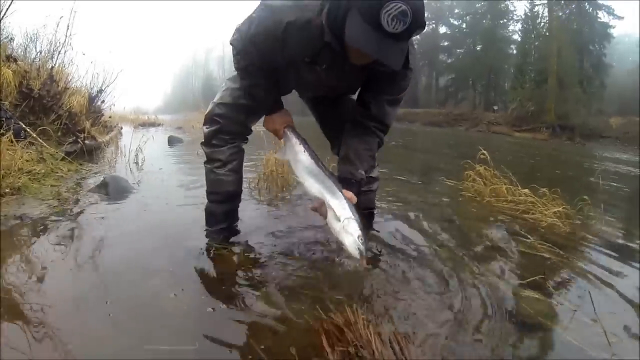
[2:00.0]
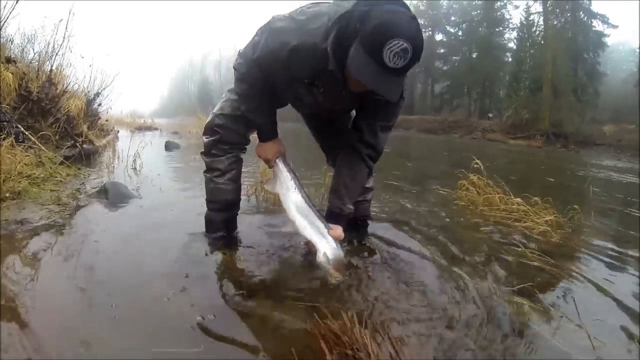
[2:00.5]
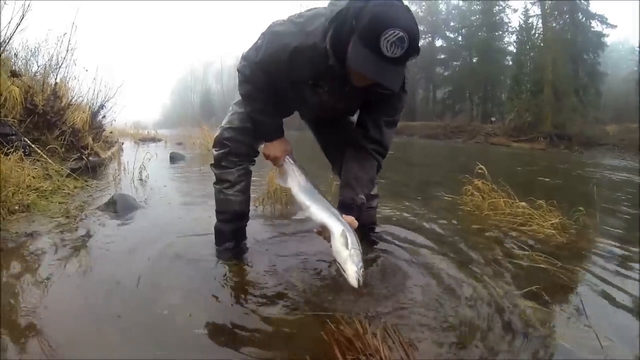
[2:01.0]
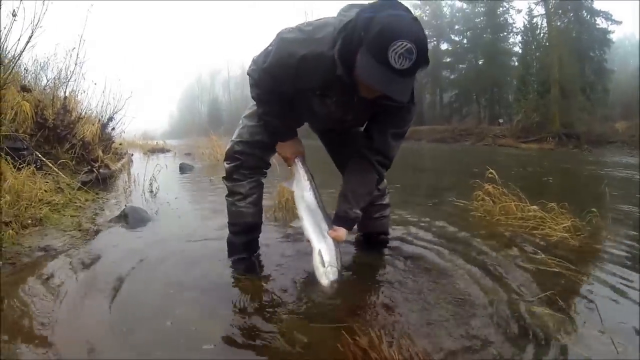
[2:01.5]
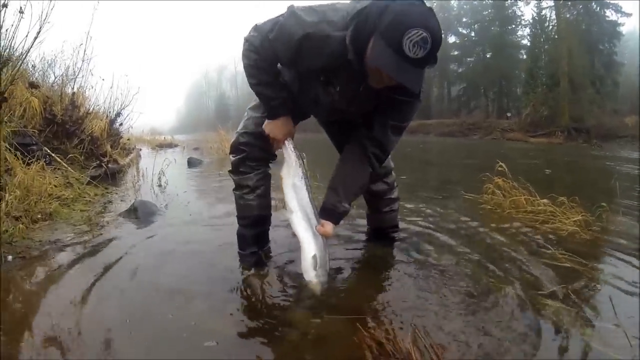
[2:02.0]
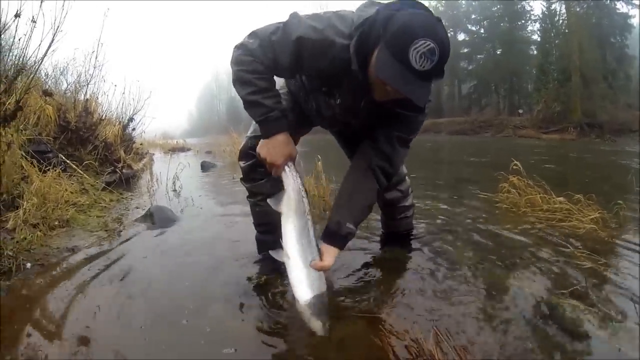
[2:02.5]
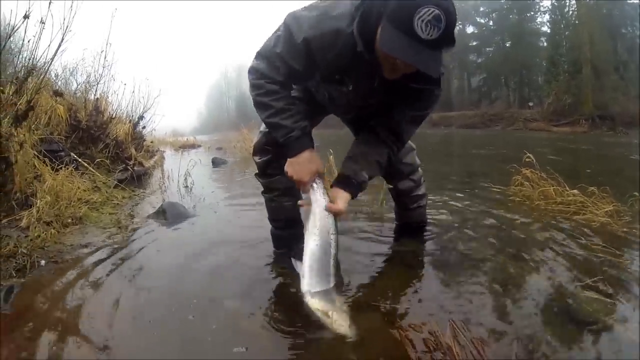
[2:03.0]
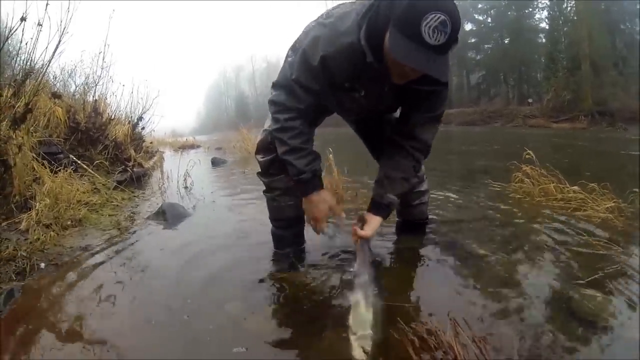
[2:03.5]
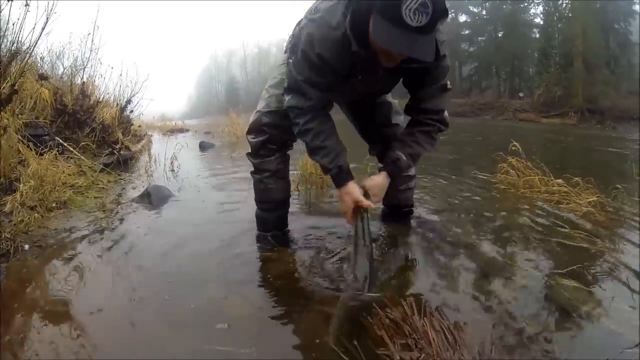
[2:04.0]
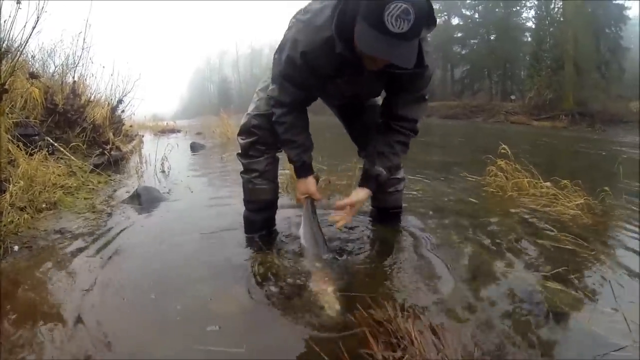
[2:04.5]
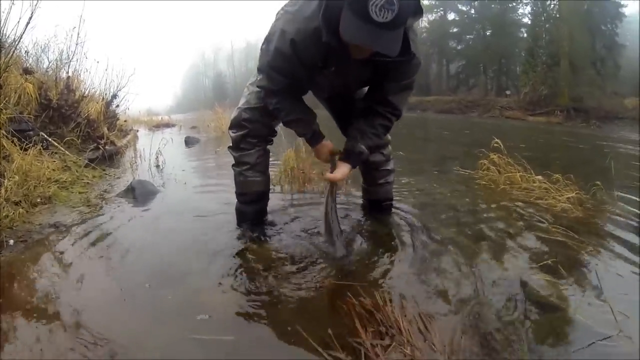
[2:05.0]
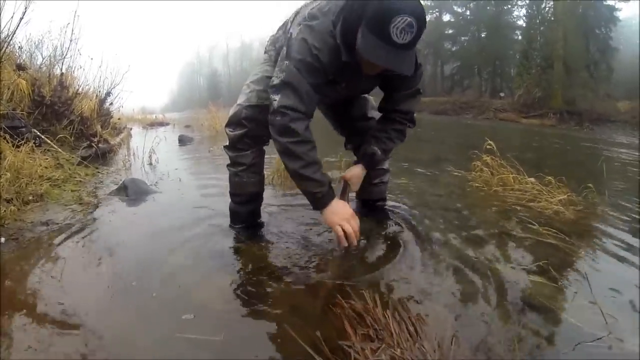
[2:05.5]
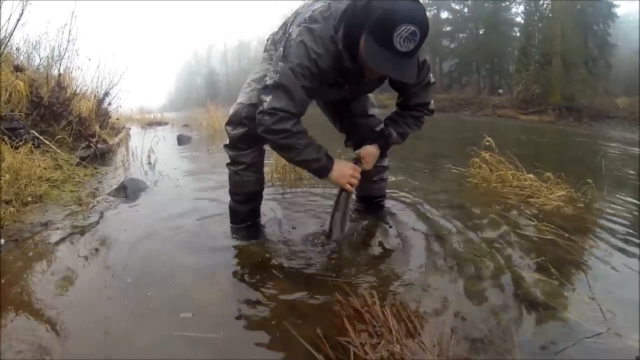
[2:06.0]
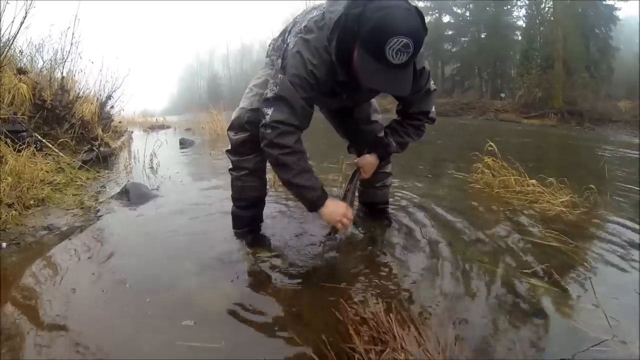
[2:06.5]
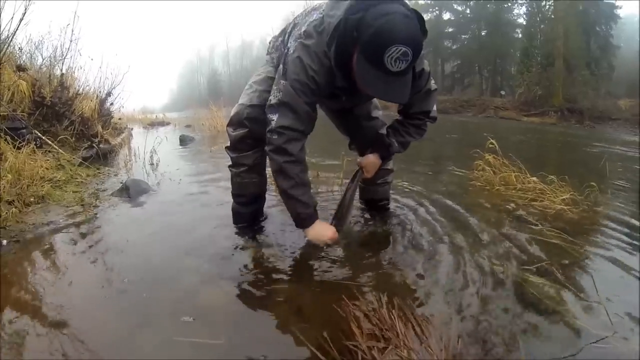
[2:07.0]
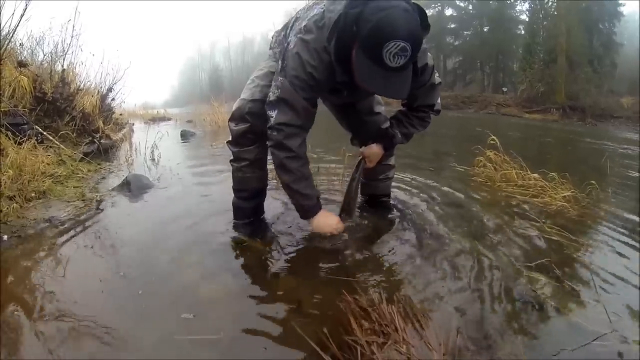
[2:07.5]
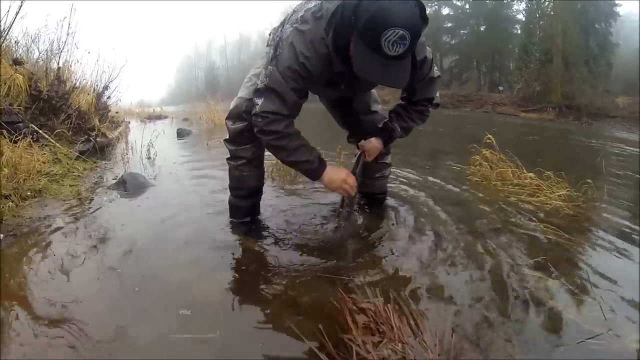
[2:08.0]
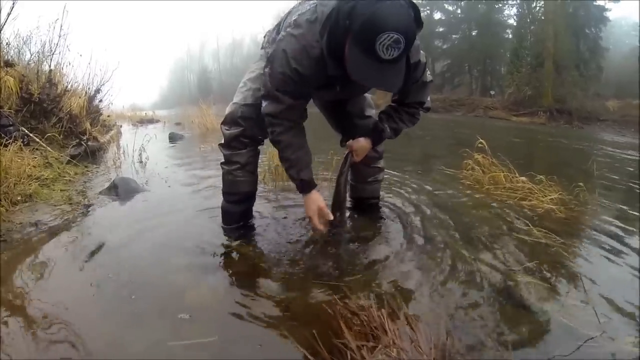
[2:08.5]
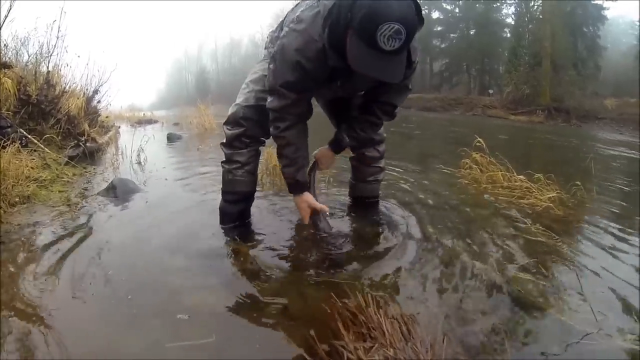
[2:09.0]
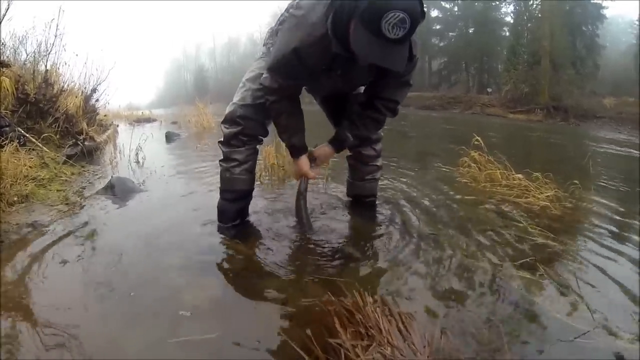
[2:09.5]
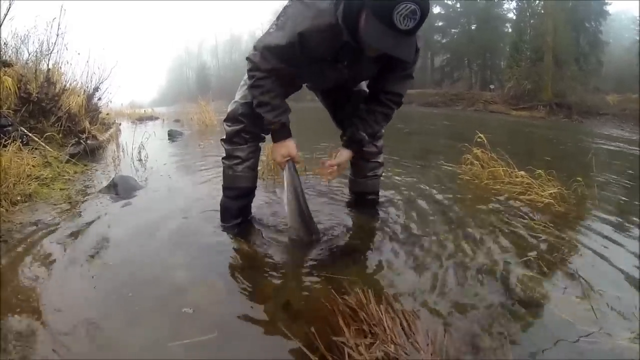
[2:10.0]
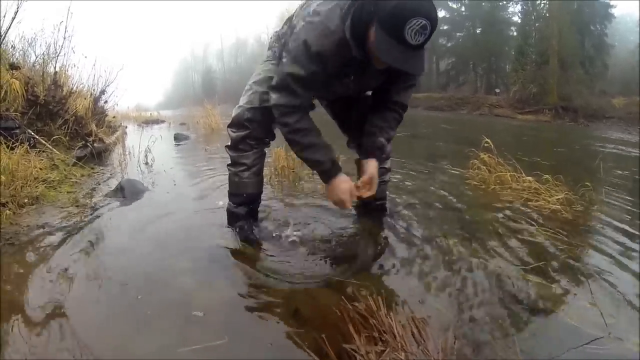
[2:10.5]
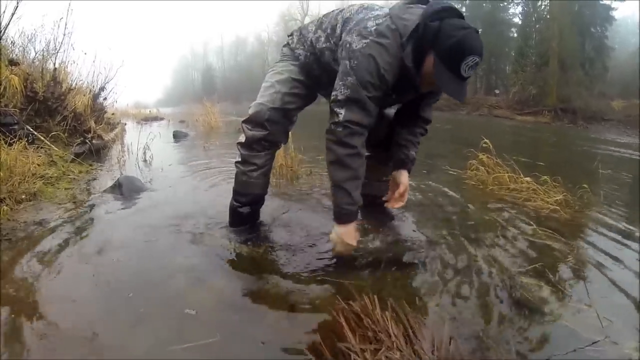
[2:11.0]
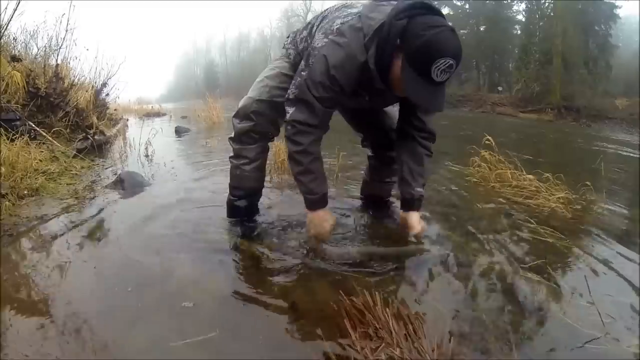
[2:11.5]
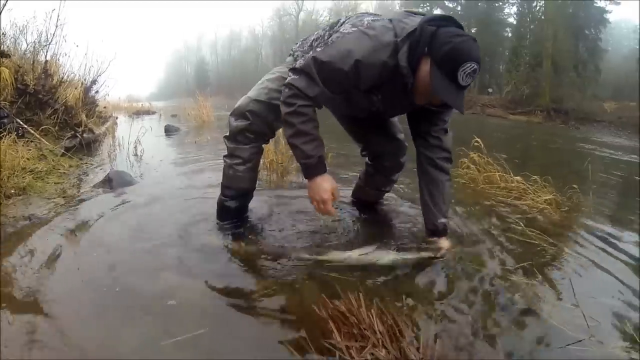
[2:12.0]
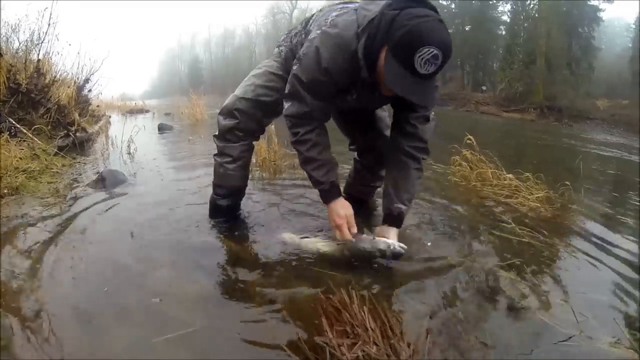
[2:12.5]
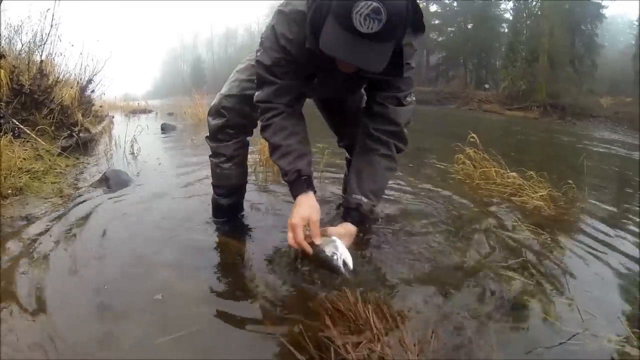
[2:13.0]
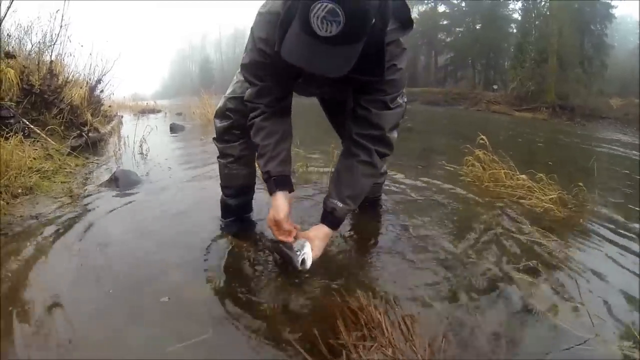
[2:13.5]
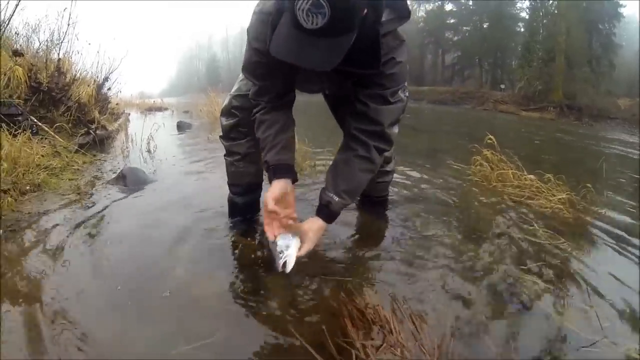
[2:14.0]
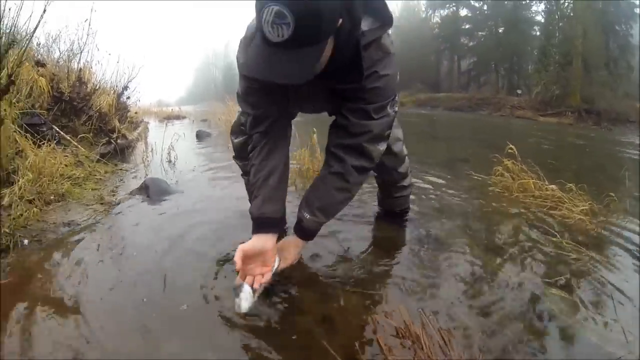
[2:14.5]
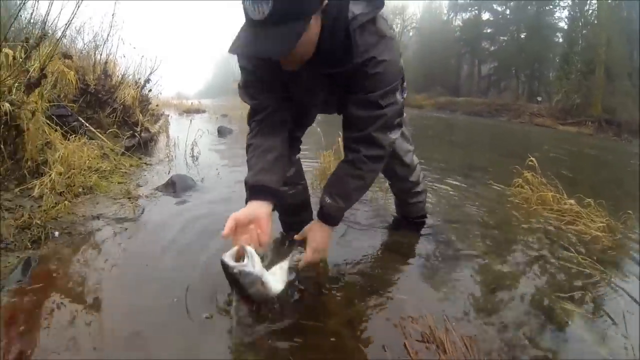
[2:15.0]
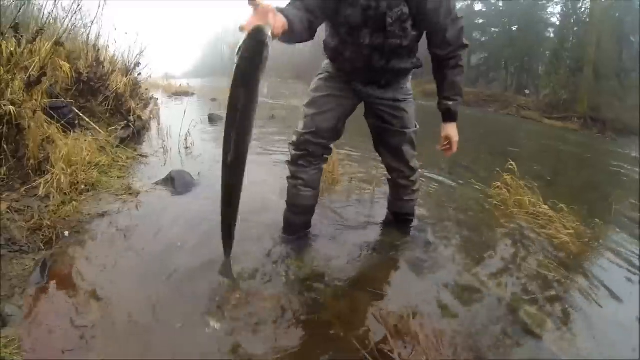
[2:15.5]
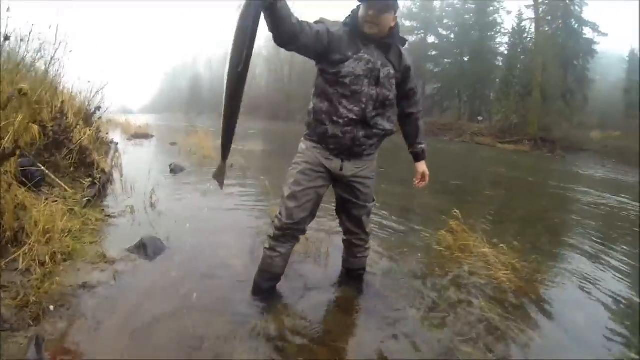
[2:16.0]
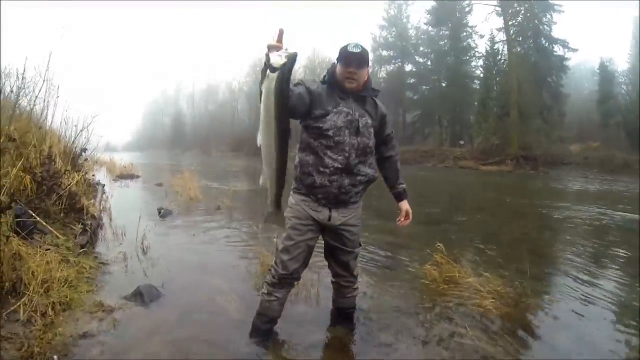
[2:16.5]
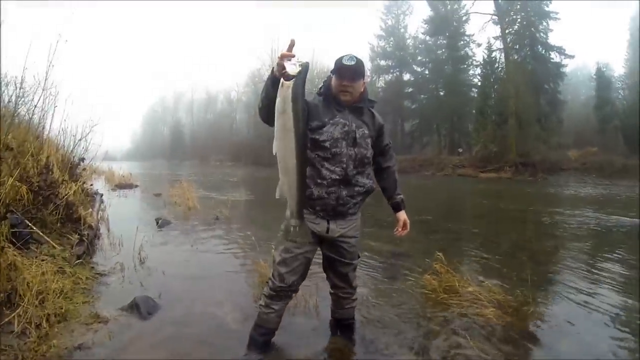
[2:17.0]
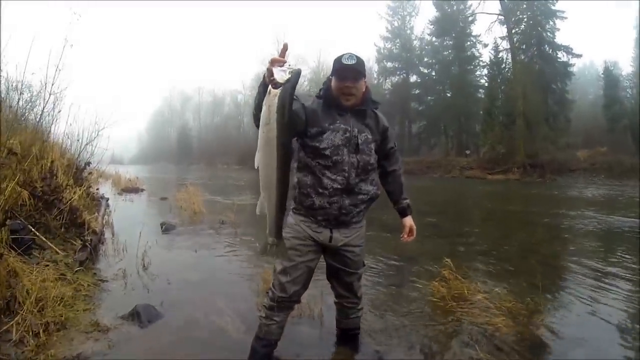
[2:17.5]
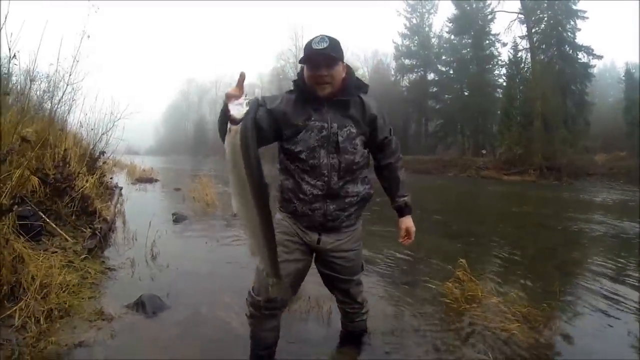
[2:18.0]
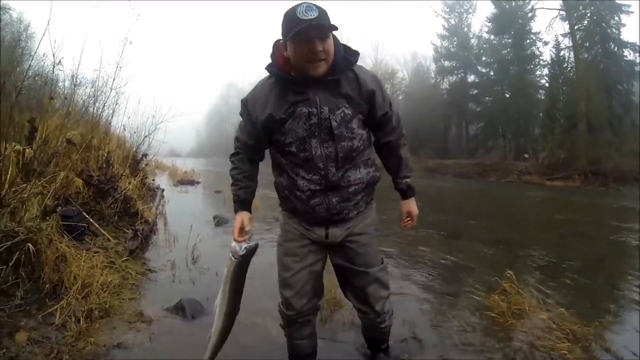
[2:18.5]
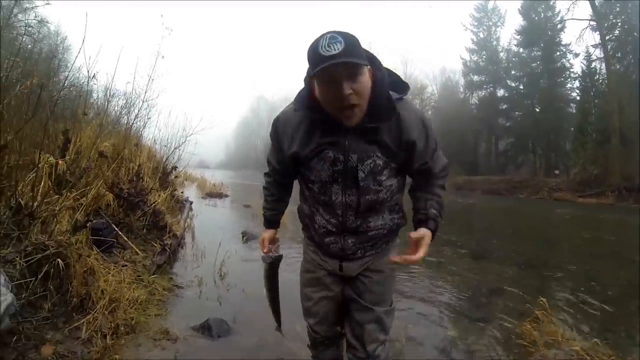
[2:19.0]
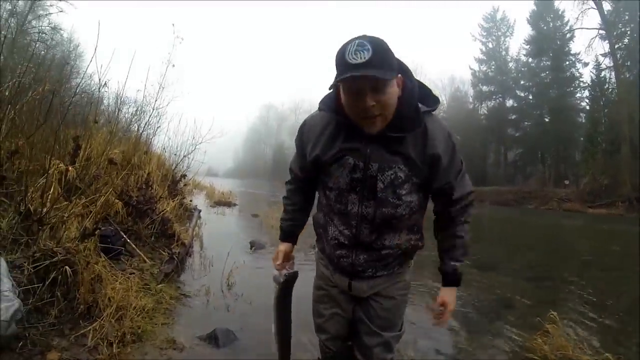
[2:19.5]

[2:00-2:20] Standing about 18 inches from the bank, where the water is a little deeper and looks like it might be about six inches up his boots, the man holds the fish in his right and left hands and washes it in the river. He dunks it in and out of the water, then almost squeegees it with his right hand to squeeze the water off or out of it, about four or five times. When he tries to switch the fish from his left hand to his right, he drops it and it starts to float away. He picks it back up with his right hand, inserting two fingers into the gill near the eye he cut earlier, shows it to the camera and begins to say something. A full-body shot shows him; he leans in close, says something and seems to turn toward the shore.